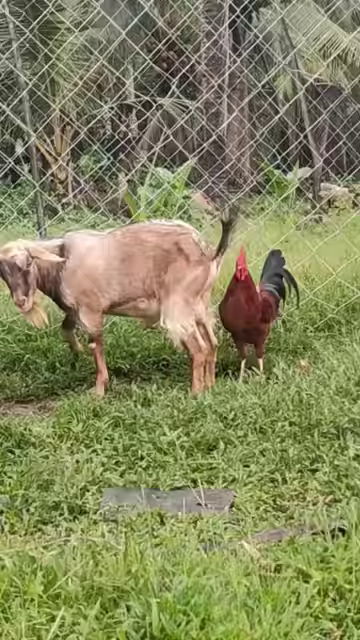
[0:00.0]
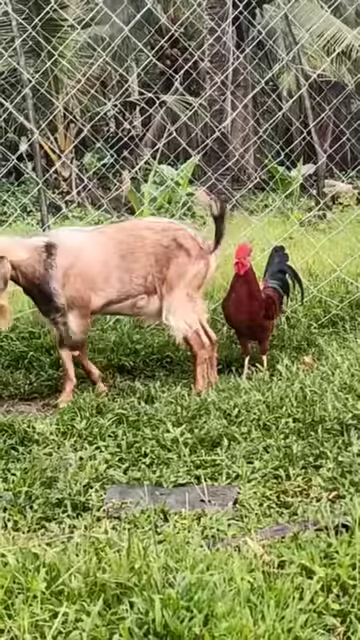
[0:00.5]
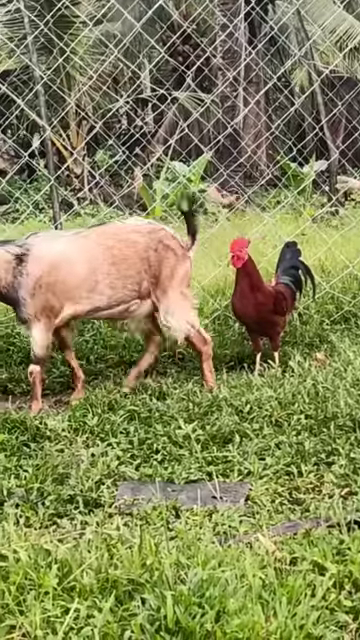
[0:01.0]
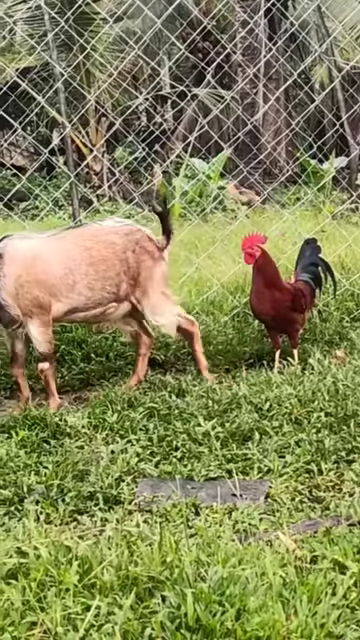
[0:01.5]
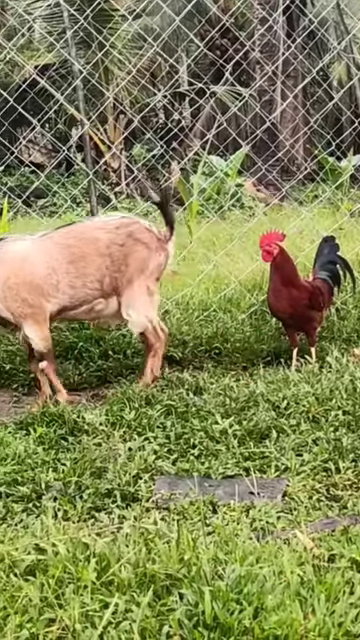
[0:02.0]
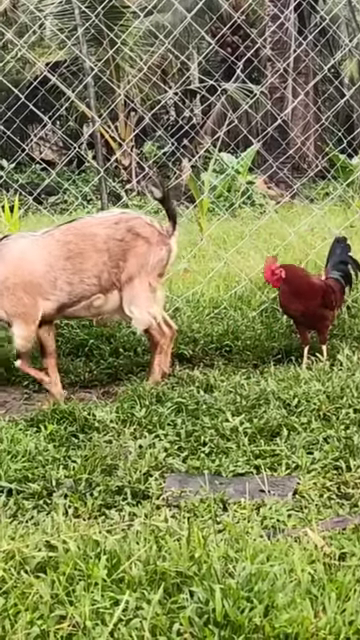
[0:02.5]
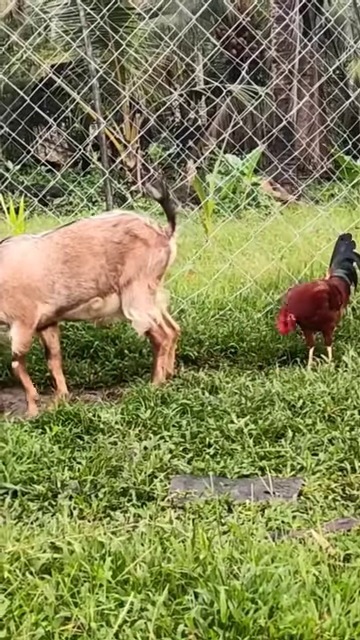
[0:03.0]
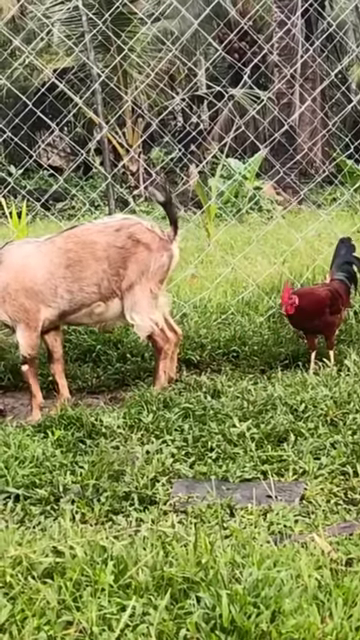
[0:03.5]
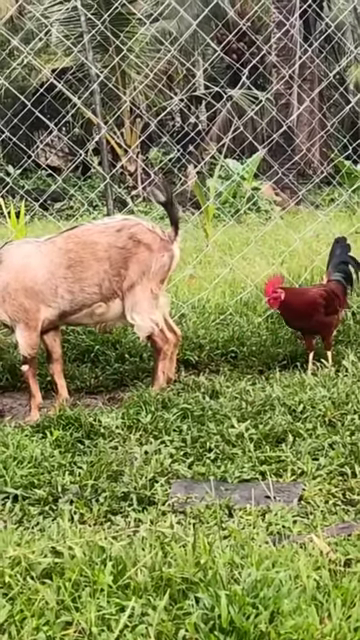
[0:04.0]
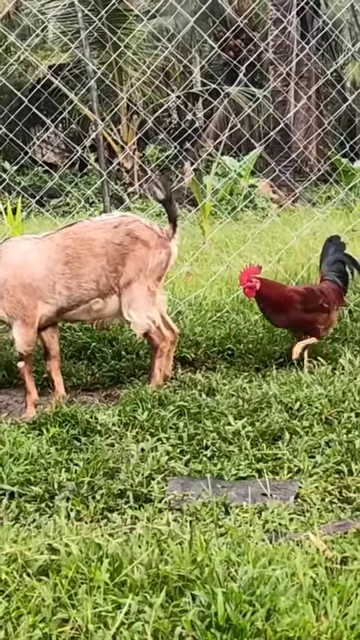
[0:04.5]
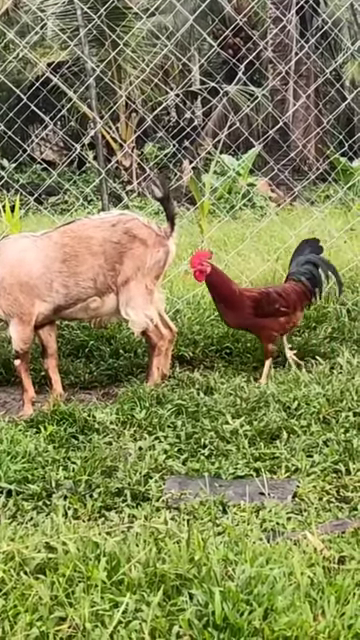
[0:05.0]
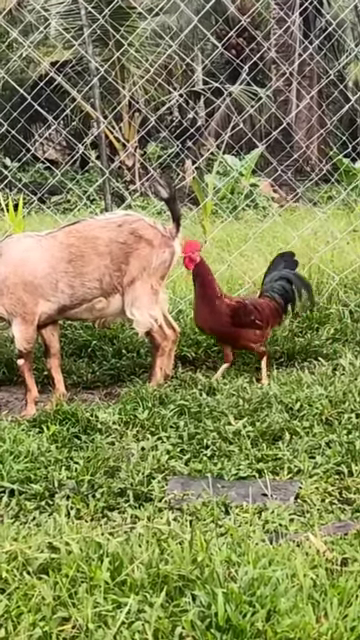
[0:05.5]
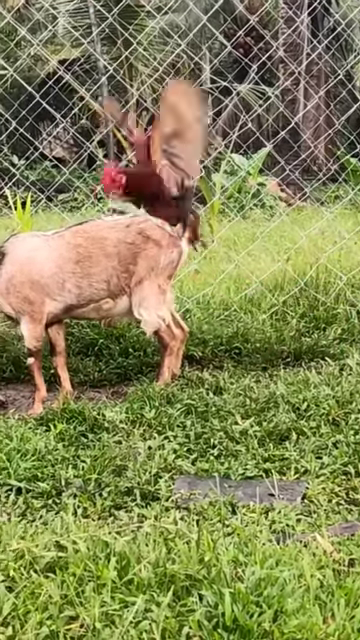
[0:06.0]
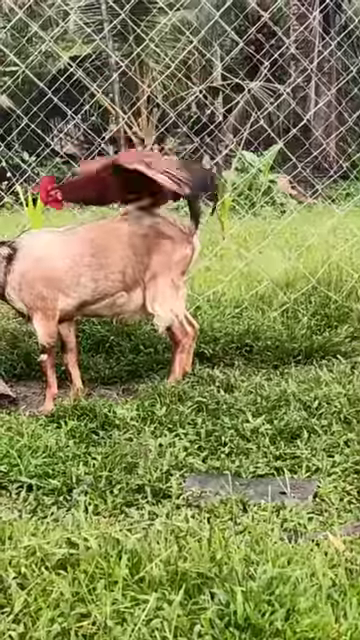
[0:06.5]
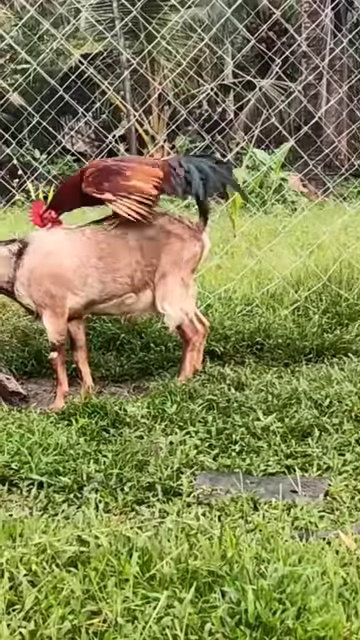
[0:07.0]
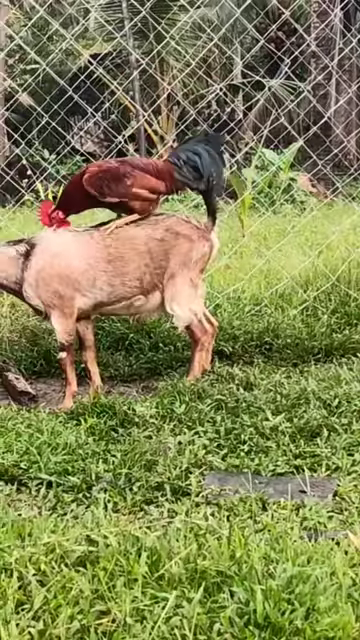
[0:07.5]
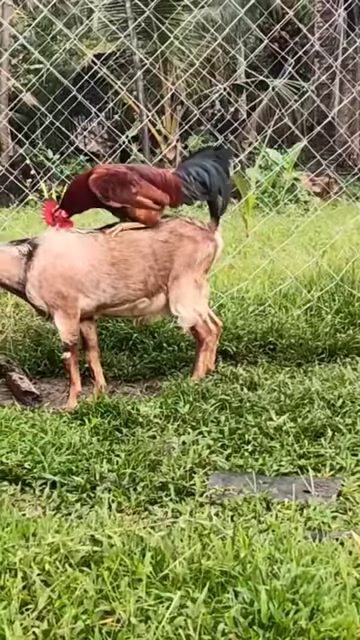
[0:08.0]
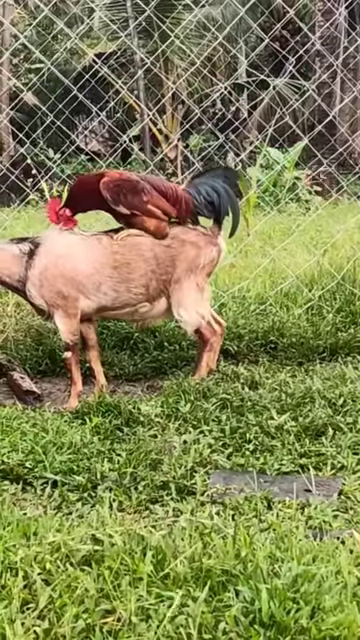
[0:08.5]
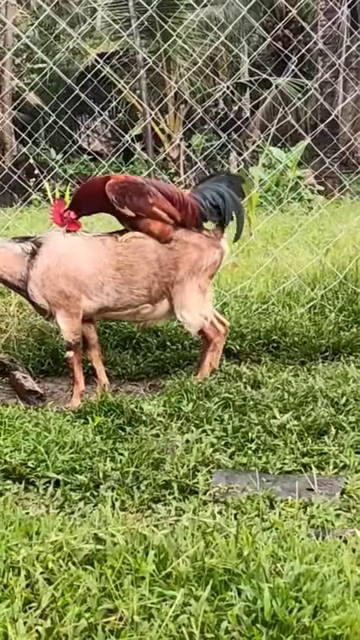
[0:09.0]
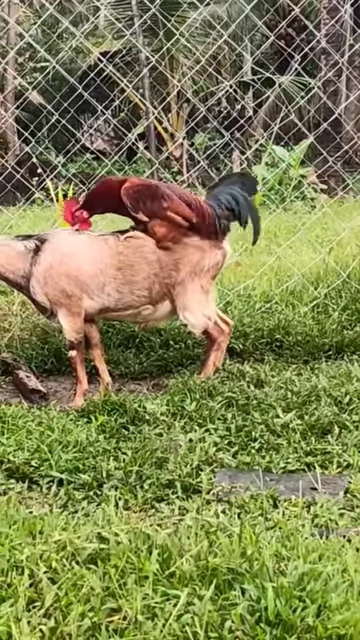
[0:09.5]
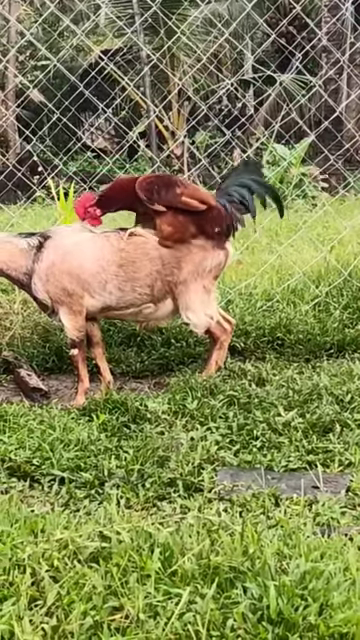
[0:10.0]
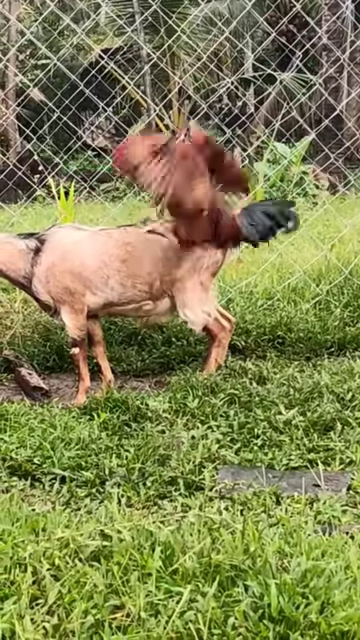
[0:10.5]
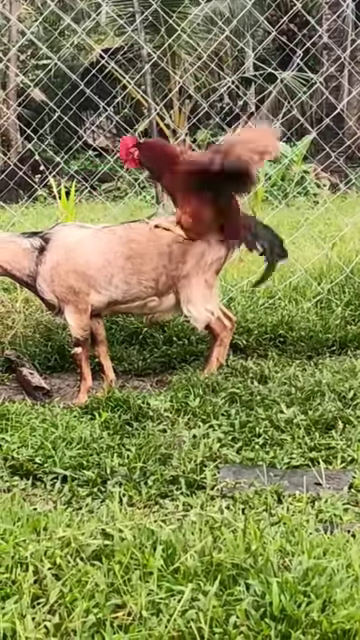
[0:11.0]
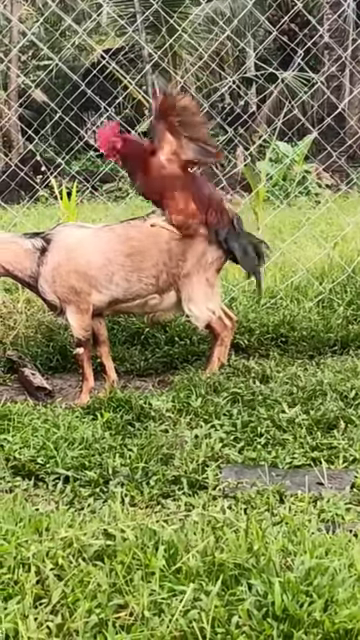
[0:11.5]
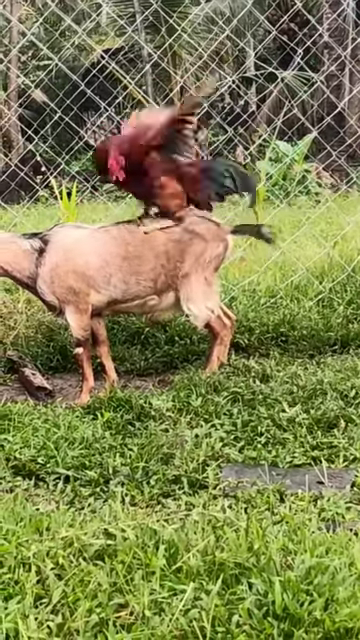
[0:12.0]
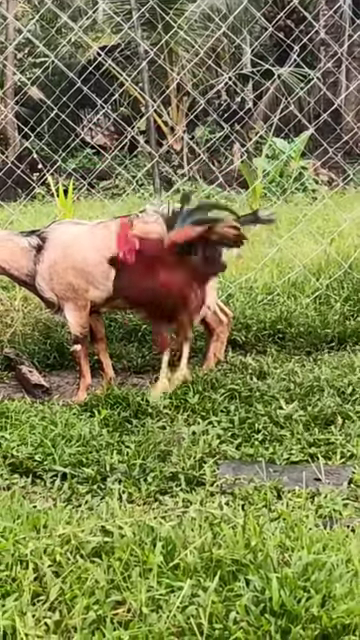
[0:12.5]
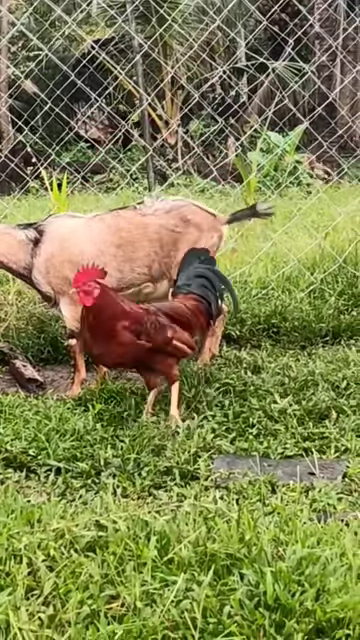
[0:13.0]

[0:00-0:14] A rooster is on the right and a goat is on the left. The rooster walks toward the goat, jumps up onto the goat's back, and starts pecking at it, then flaps its wings while on top of the goat. The animals appear to be in some sort of cage, with grass about 4 or 5 inches tall under the chicken and goat. At the very end, the rooster falls off the goat's back.